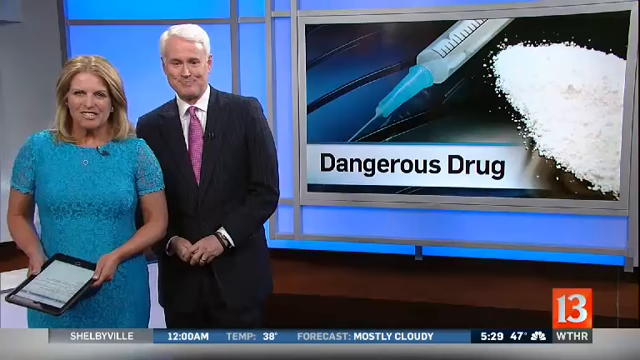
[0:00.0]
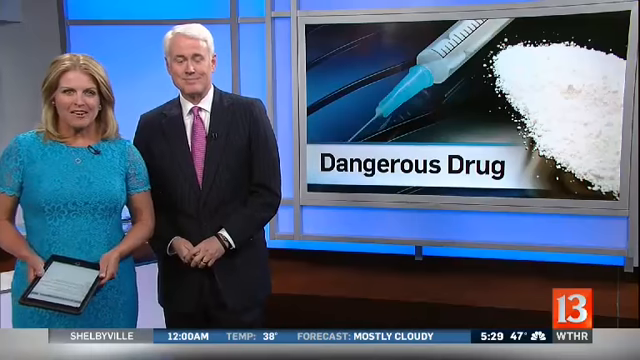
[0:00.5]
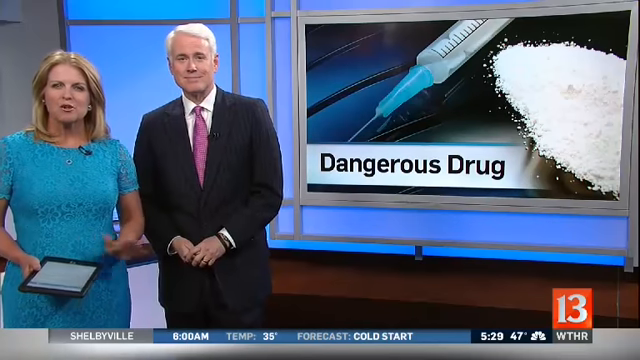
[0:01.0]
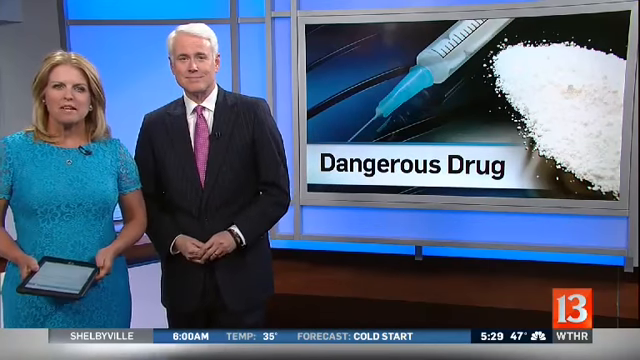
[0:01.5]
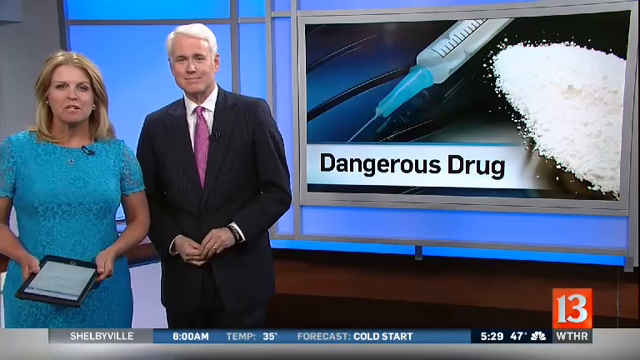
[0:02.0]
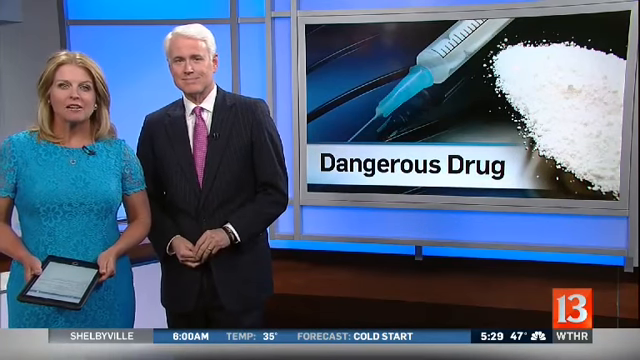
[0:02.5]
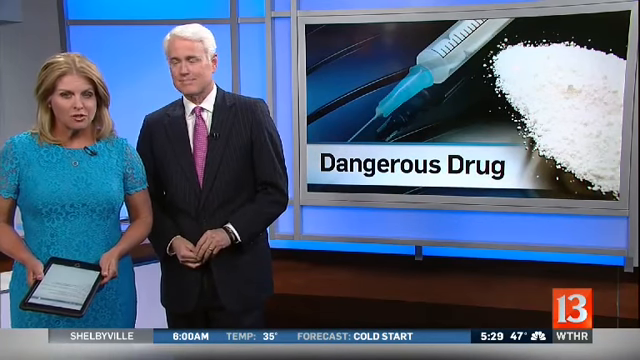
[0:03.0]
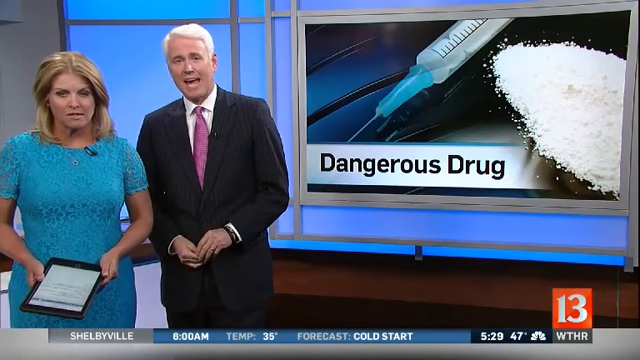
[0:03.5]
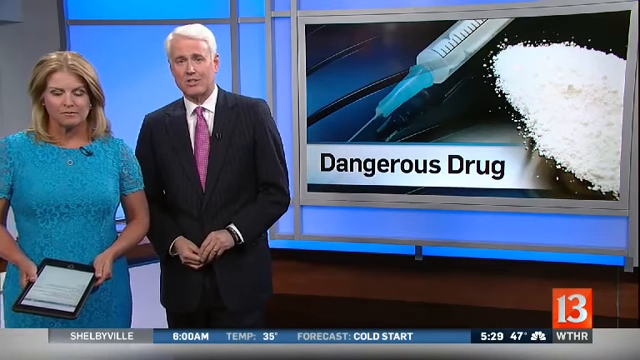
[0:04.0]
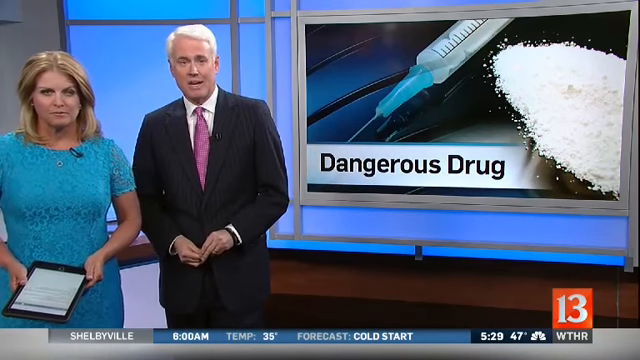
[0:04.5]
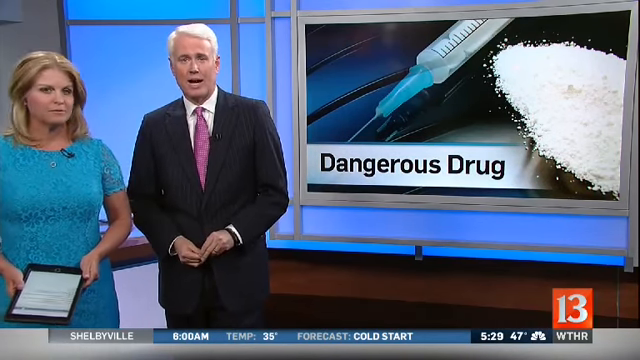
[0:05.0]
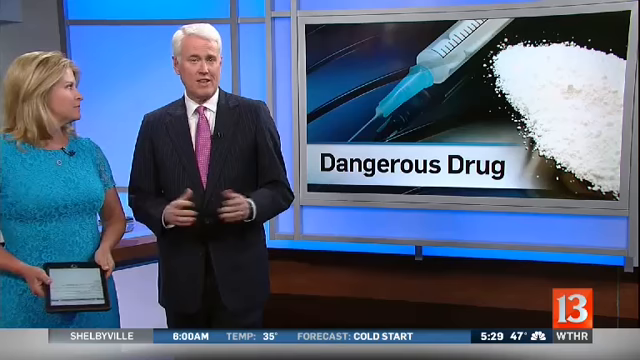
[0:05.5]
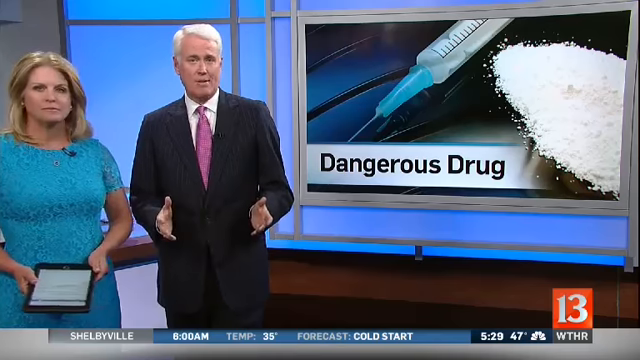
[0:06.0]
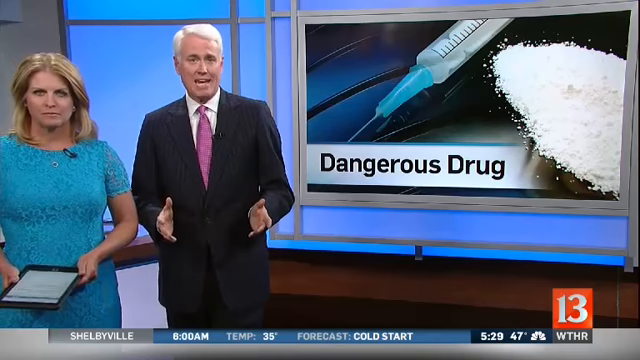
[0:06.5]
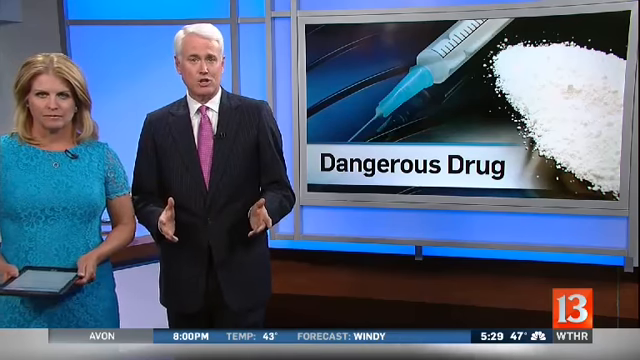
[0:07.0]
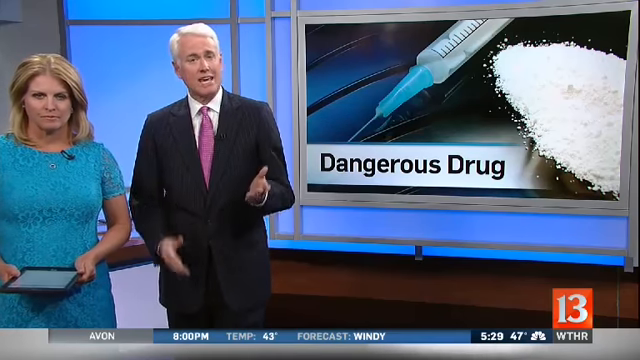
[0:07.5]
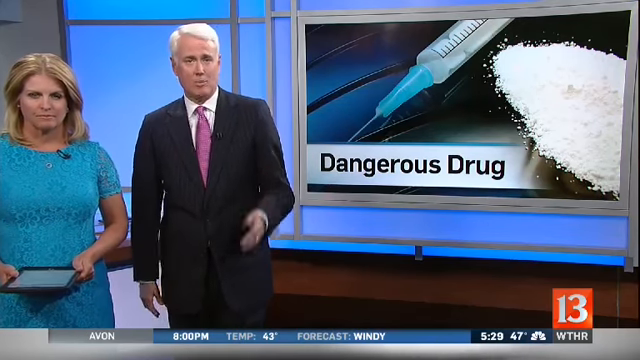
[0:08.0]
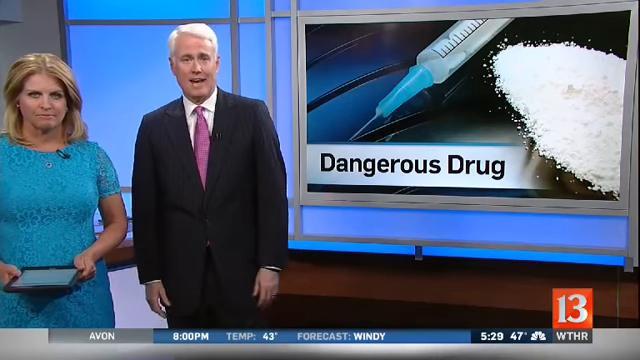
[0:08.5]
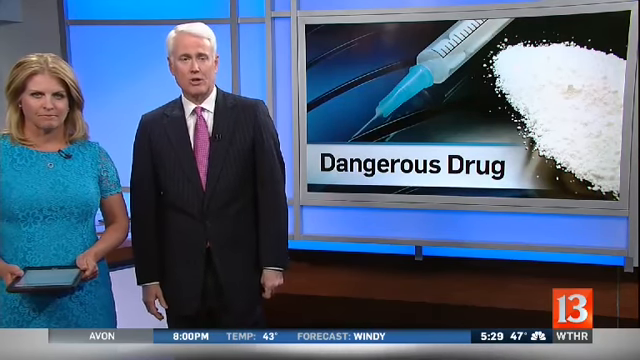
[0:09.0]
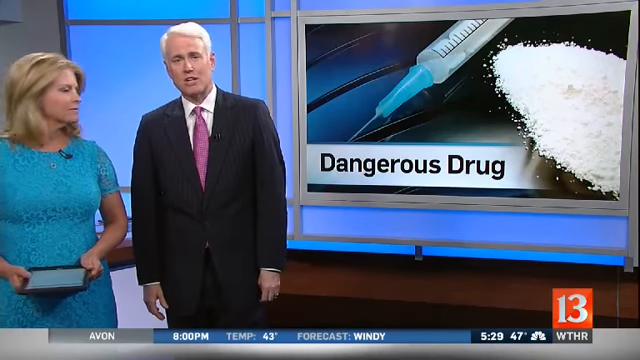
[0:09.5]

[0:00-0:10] The video opens on 13 news, with two individuals on the left side of the screen in a studio office setting, with a white wall in the background. A subtitle appears on a white background with black text. On the right-hand side of the screen is a picture of what looks like a piece of cocaine and a syringe on a table. A lady in a blue dress and a man with white hair in a black suit, white shirt and pink tie both speak, and the lady looks toward the man while holding an iPad in her hand.